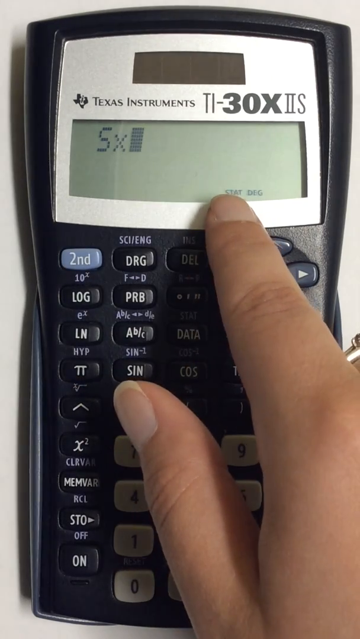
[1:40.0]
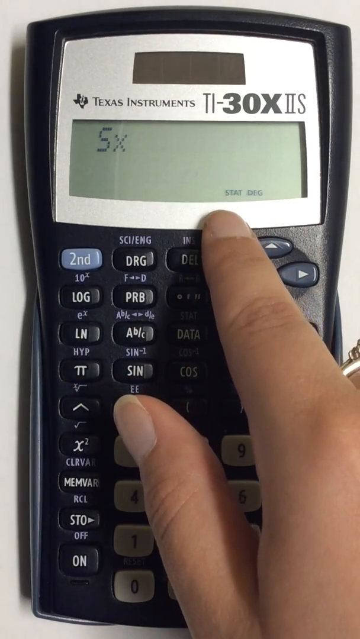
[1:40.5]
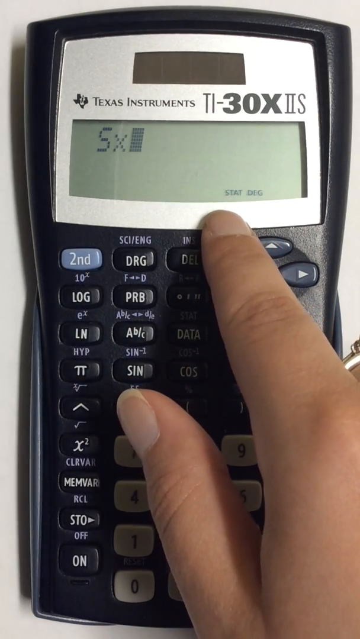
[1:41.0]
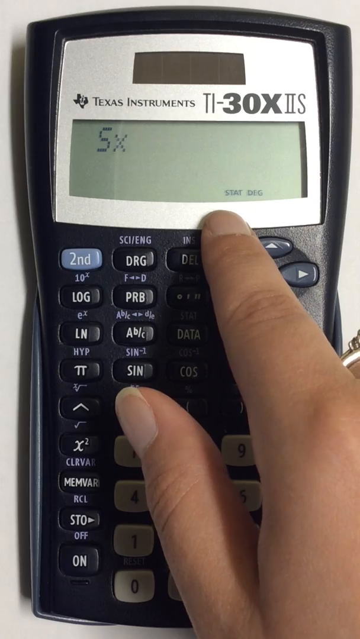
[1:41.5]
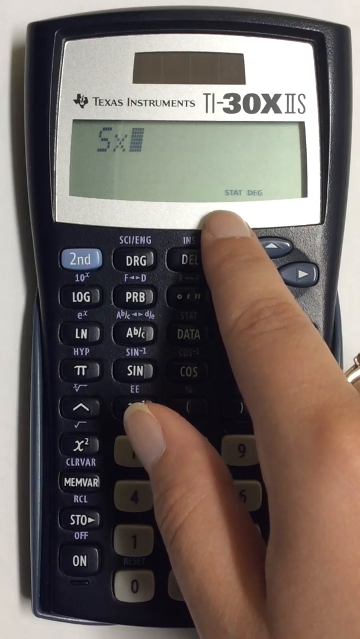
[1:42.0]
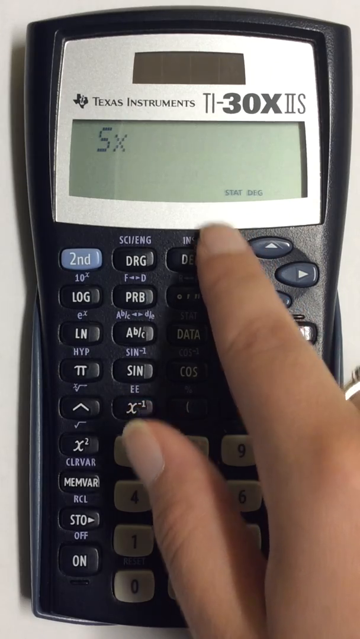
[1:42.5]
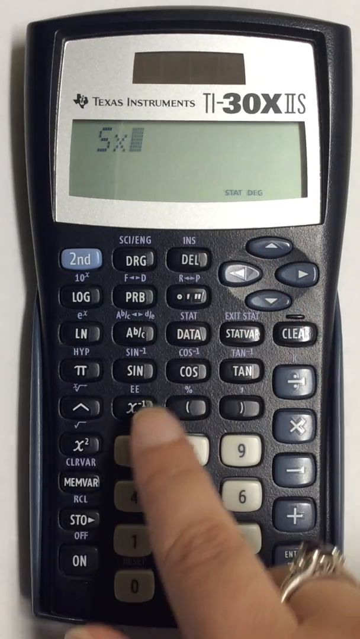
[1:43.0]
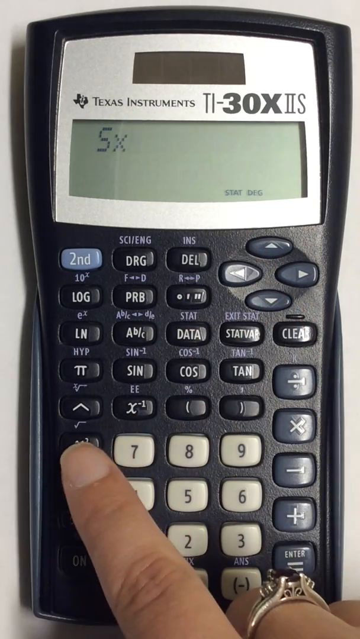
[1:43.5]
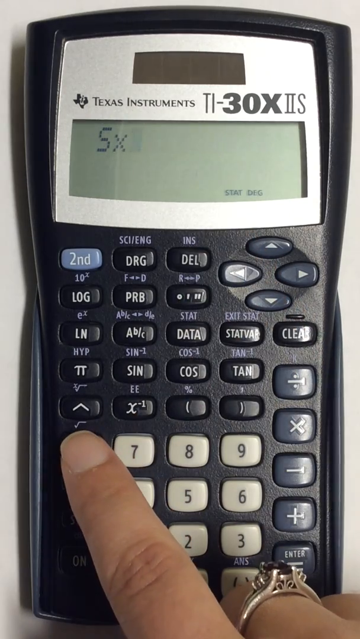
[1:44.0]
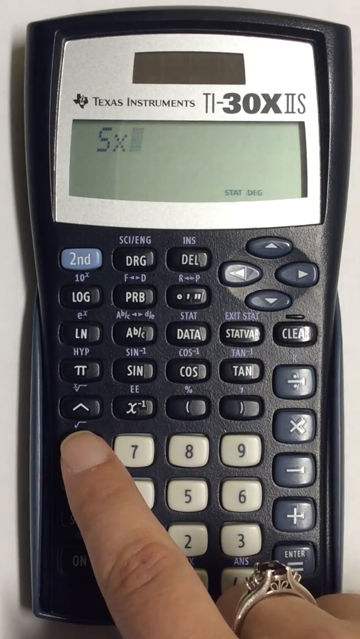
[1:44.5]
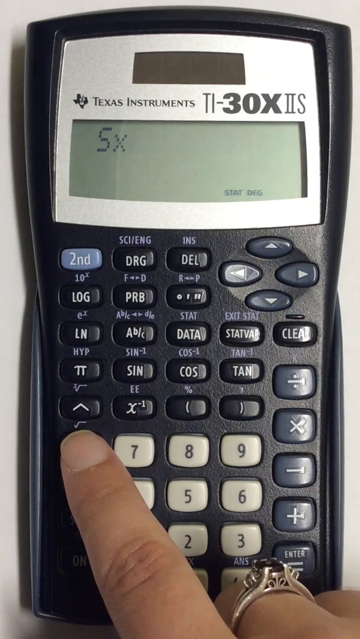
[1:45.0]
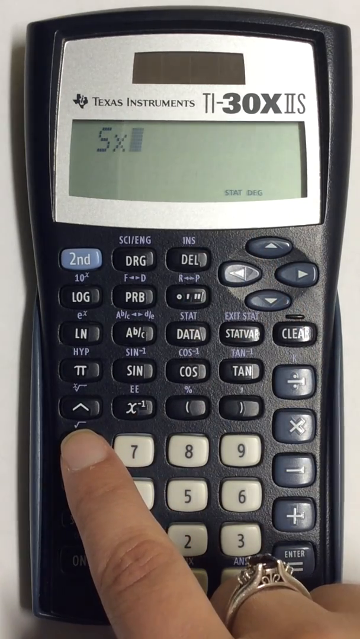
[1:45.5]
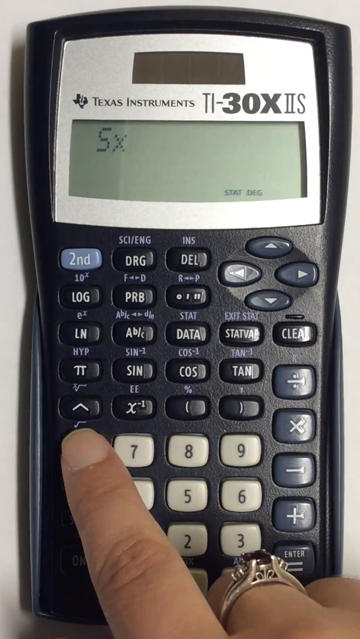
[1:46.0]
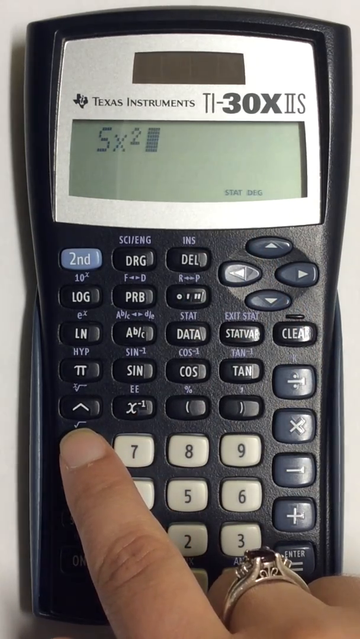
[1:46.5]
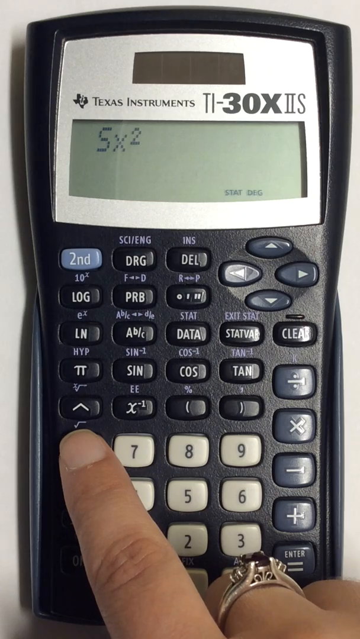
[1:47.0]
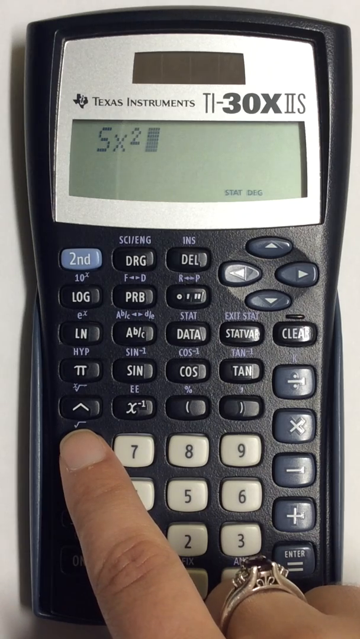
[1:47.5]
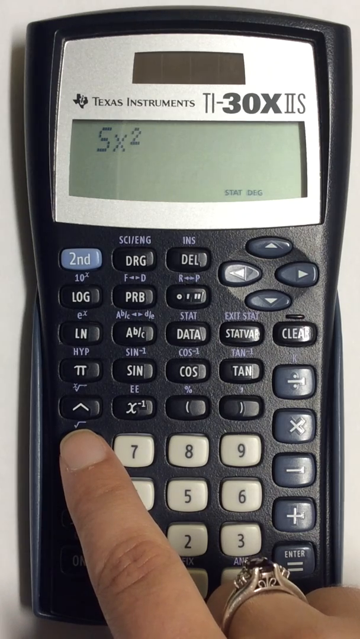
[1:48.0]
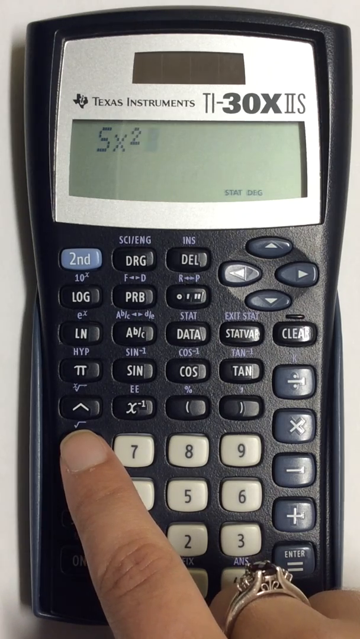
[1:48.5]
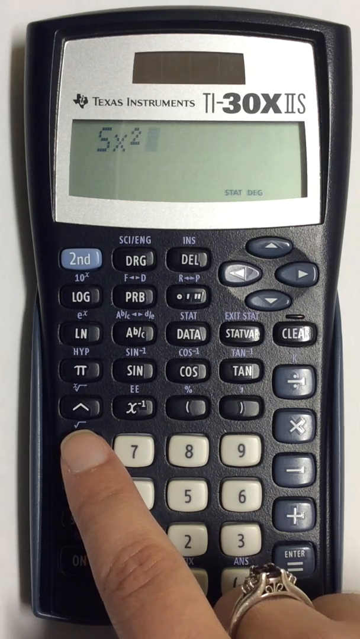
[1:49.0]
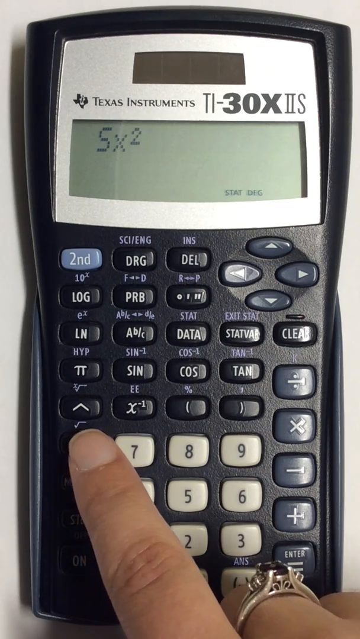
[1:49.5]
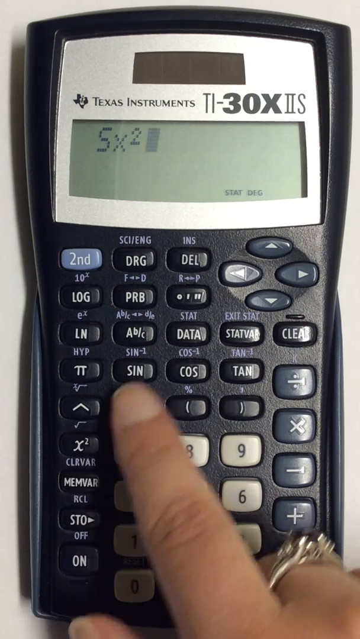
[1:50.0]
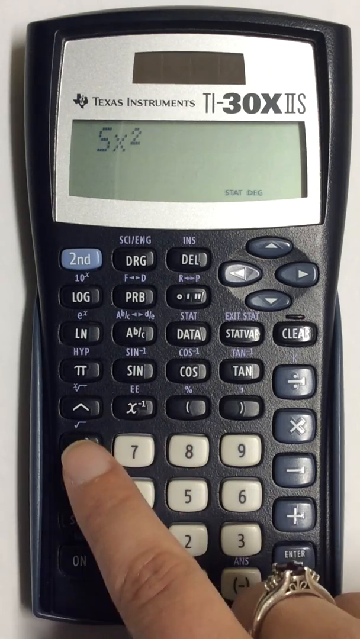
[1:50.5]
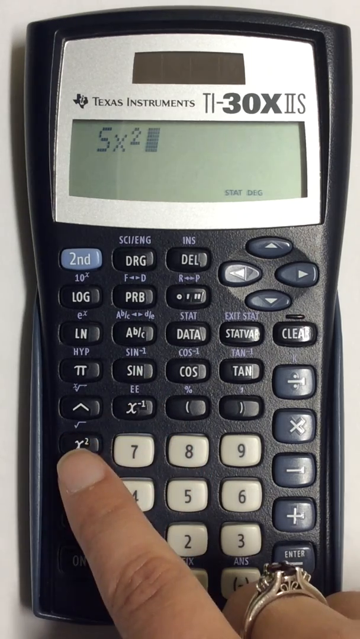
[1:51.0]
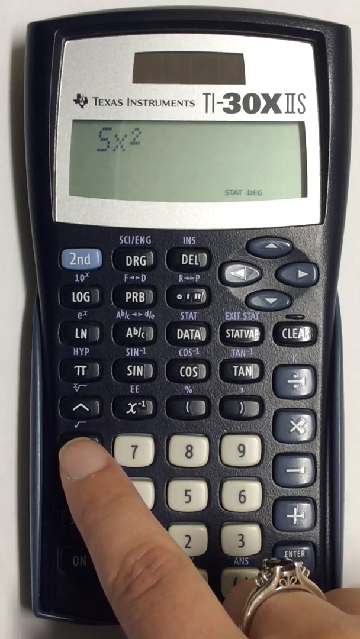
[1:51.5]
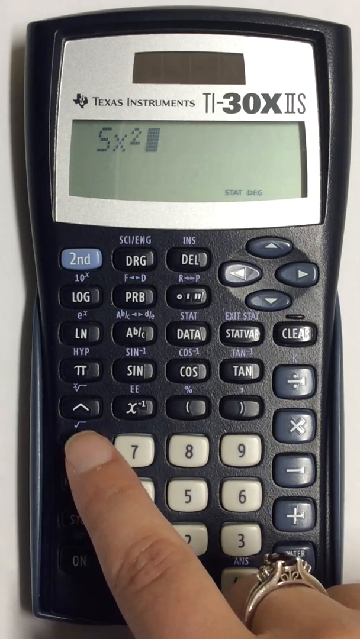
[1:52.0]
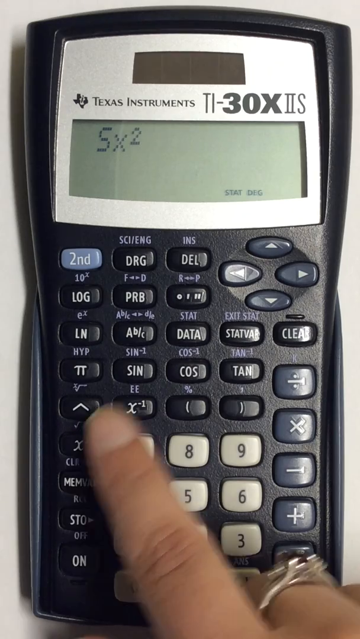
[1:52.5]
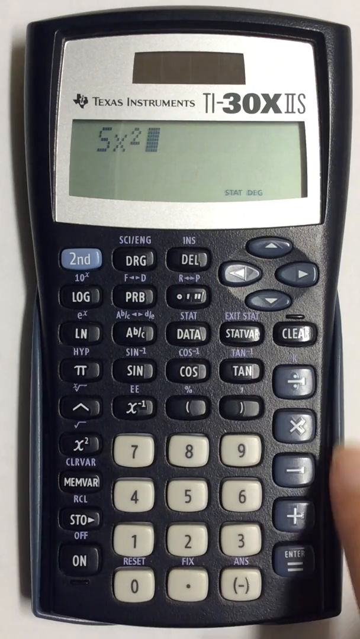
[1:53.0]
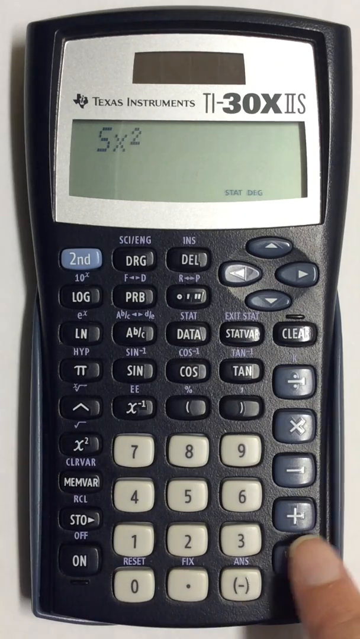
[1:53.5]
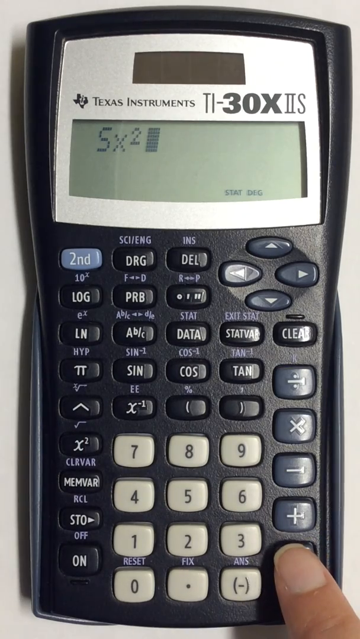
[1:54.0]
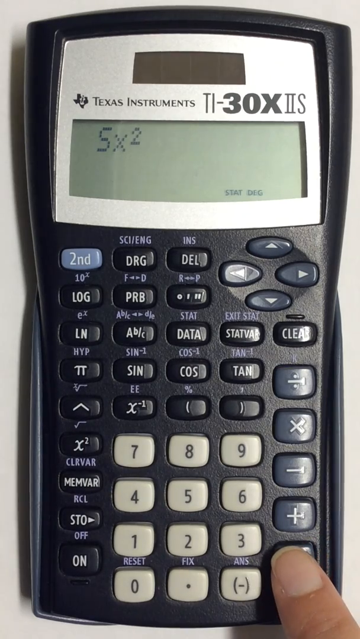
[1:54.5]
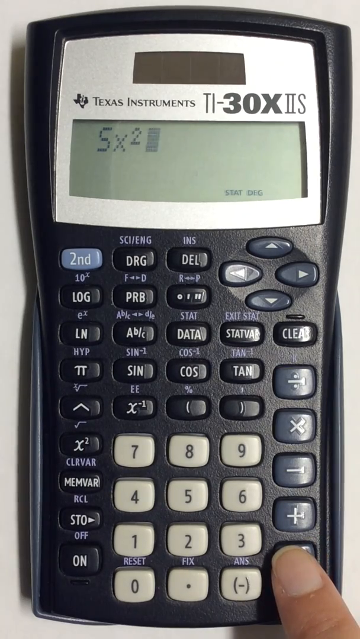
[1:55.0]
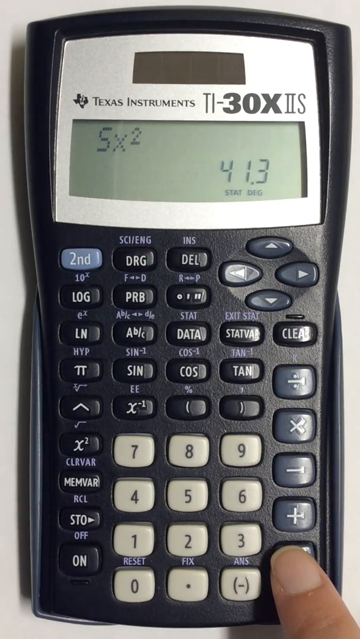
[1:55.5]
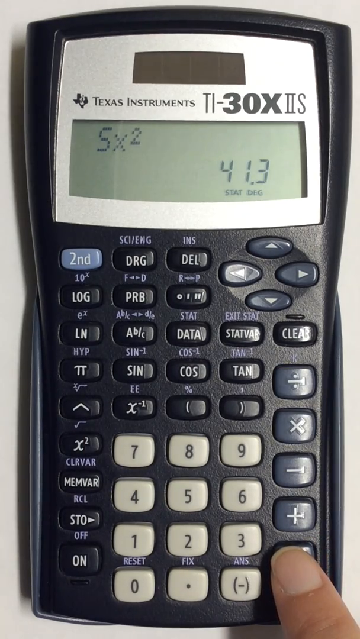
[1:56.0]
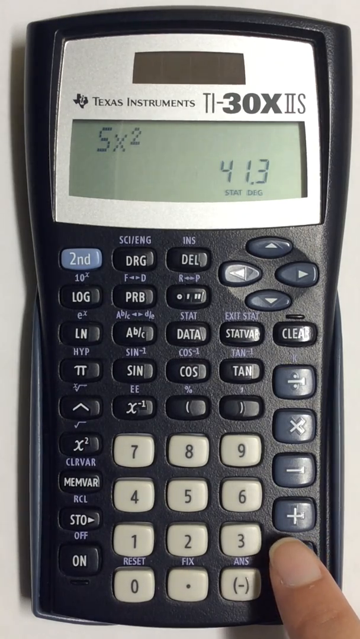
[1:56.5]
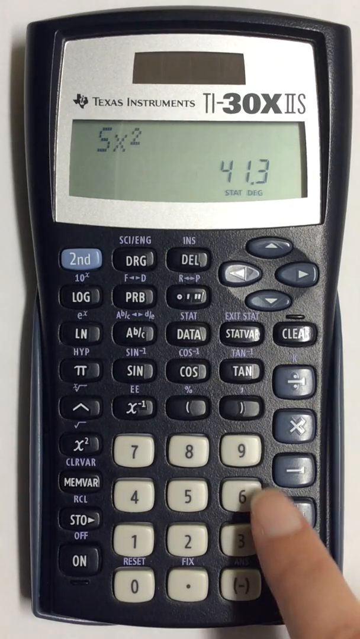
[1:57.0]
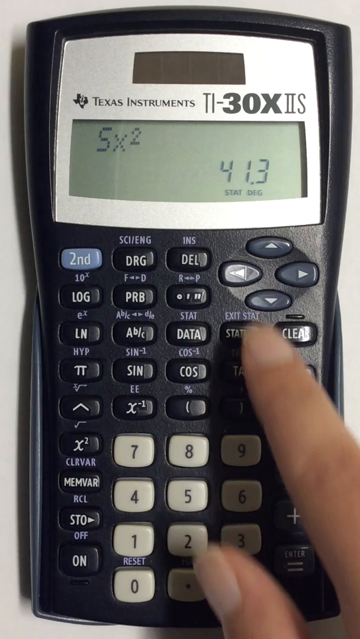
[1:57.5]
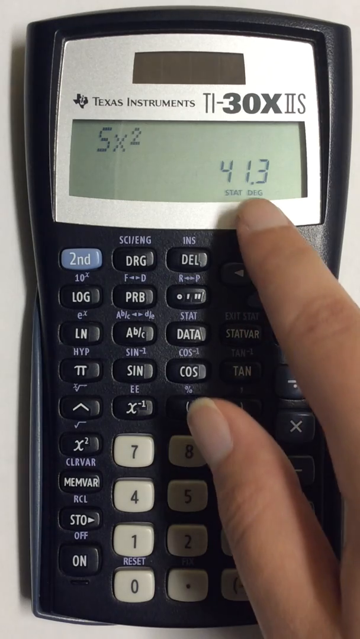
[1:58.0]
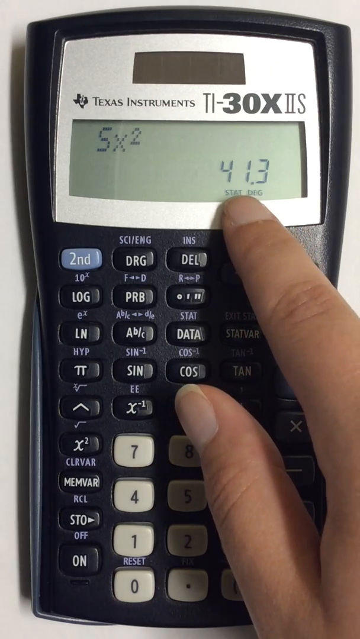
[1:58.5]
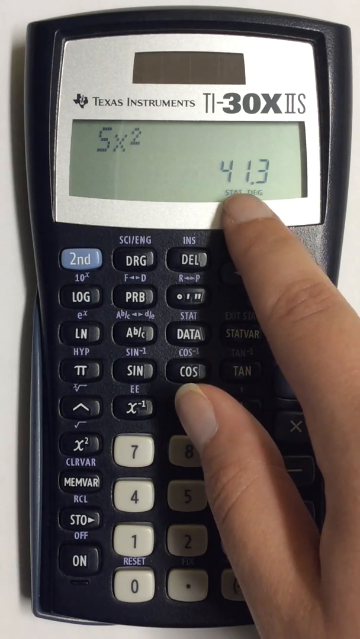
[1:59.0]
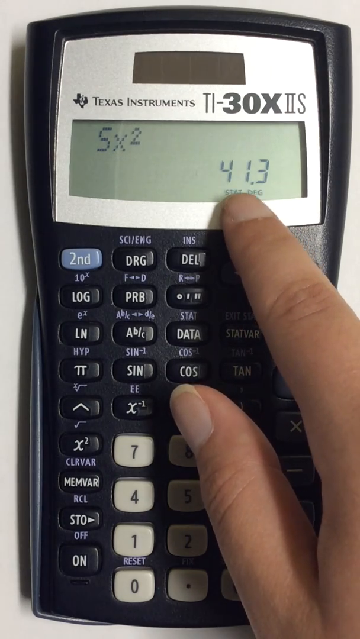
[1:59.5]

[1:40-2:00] A hand points at the display screen of a blue and silver Texas Instruments 30X2 calculator, which shows "SX". The dark blue buttons say things like "log", "SIN", "cost", "data", "delete" and "DRG", there is a lighter blue button that says "second", and gray buttons show numbers such as 1, 4 and 9. The person points at the display, then moves down to a button near the number 7 and presses it, and a 2 pops up on the display. They kind of hesitate, then press the equal sign button, and the number 41.3 pops up. They then point their finger at the display screen.